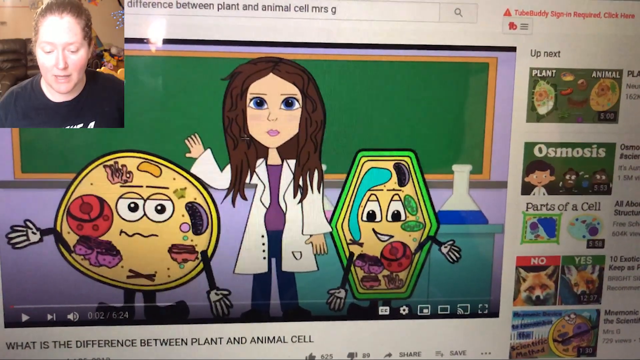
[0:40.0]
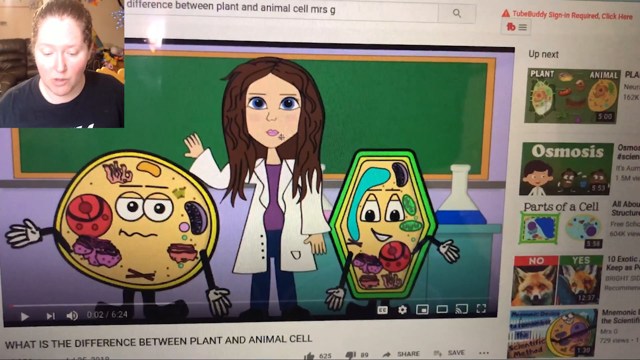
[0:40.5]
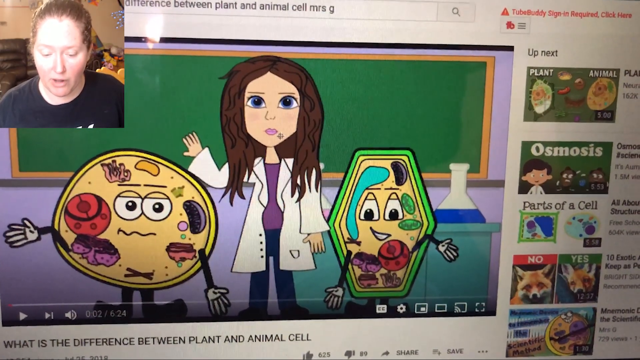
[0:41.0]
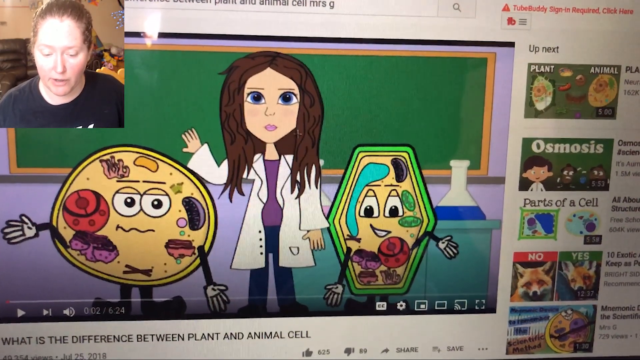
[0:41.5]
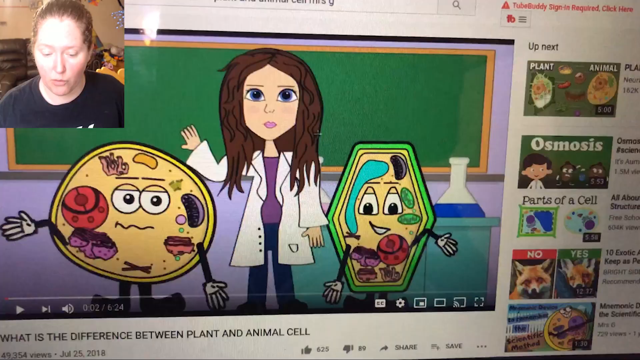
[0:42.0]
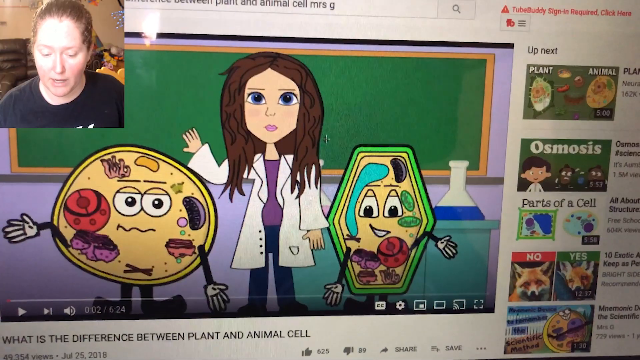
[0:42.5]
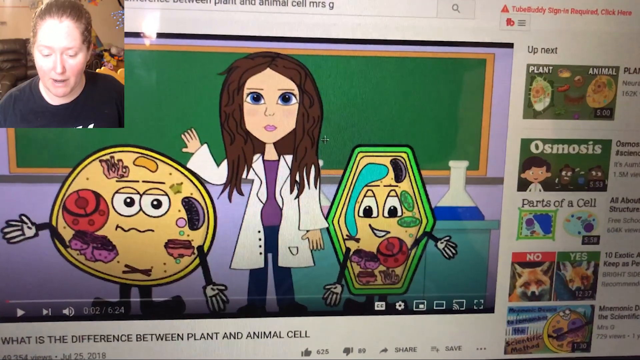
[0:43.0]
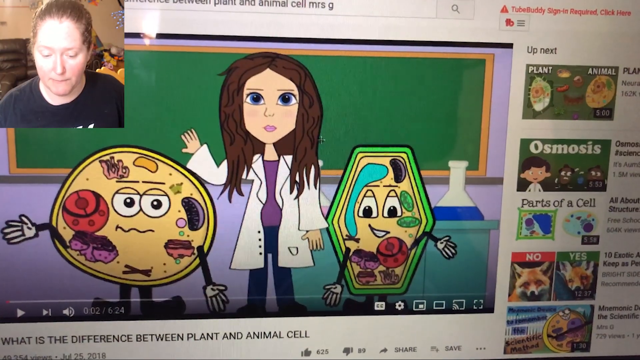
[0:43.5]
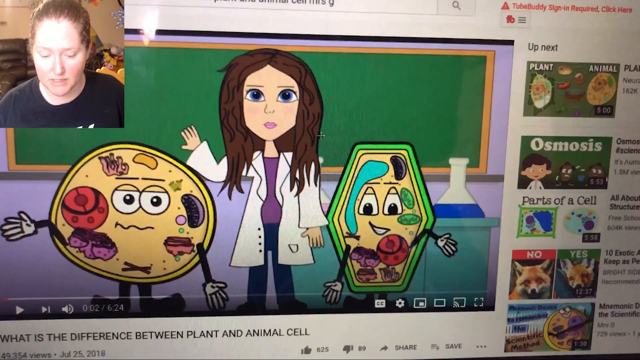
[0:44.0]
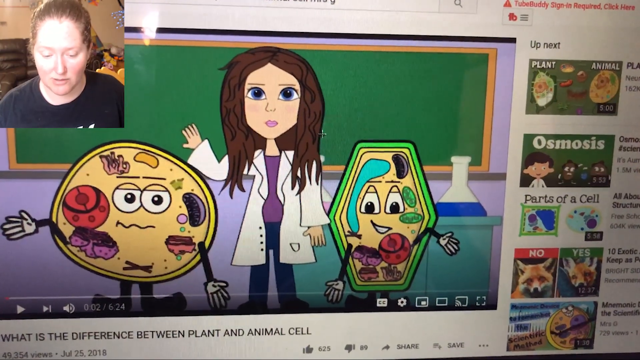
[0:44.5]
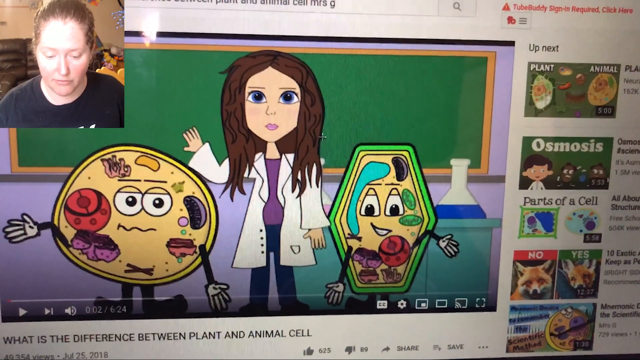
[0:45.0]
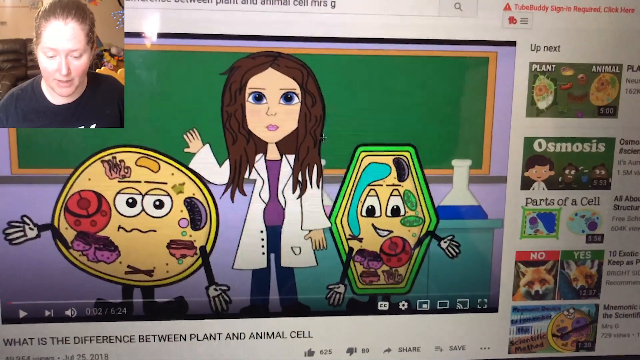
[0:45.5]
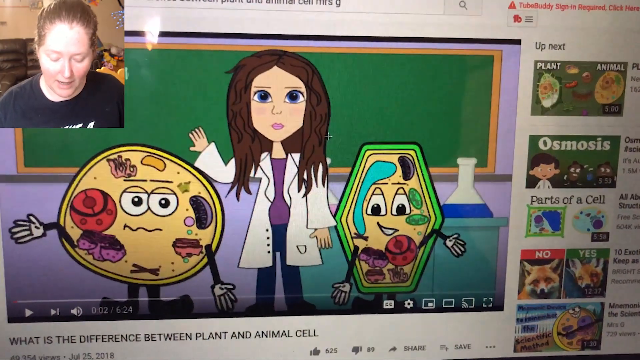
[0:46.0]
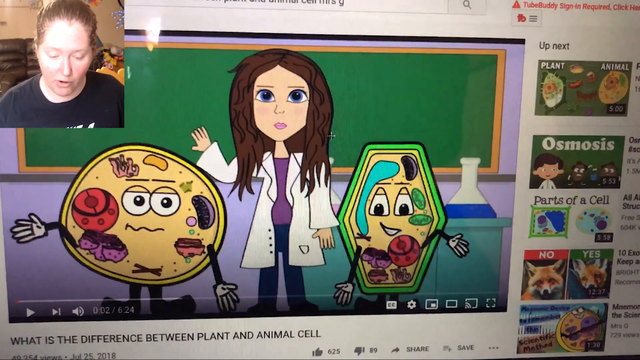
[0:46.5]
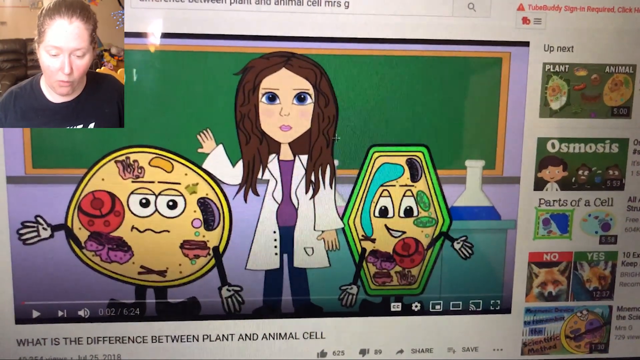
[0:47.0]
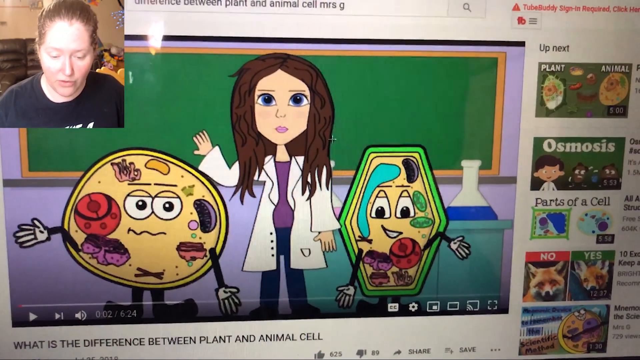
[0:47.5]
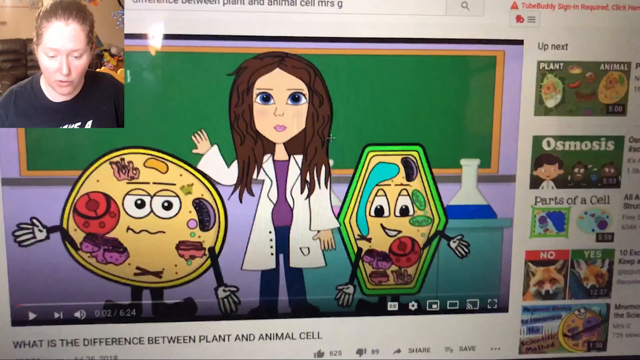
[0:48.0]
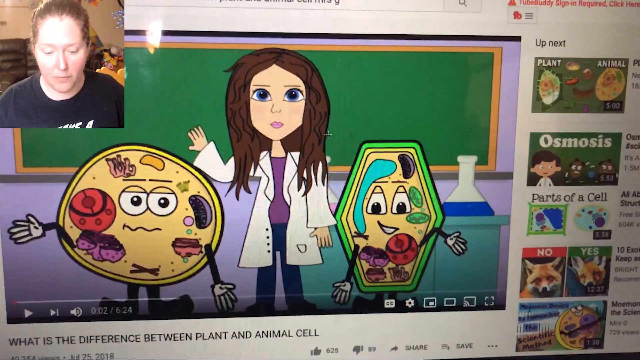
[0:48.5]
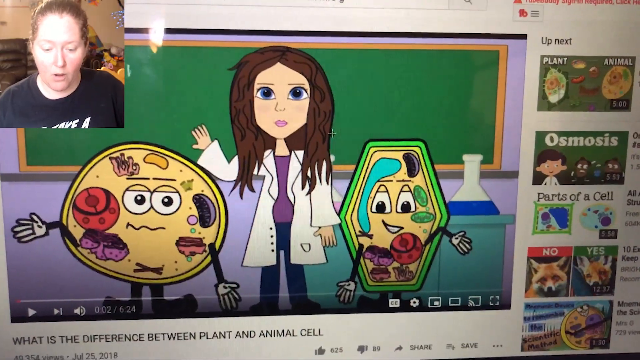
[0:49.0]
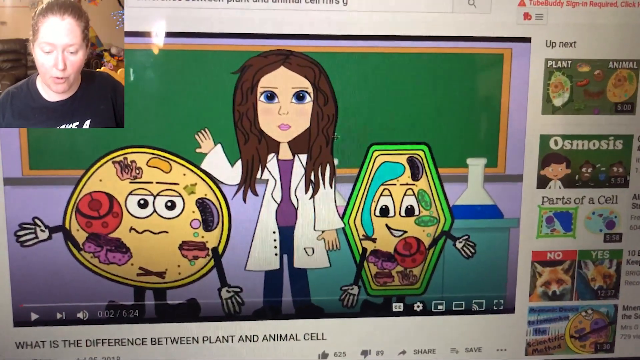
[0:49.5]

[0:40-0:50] The woman appears on the facecam. Her hair is tied back, possibly in a ponytail, and is sort of reddish; she wears a black shirt, the lighting looks pretty yellow, and there is a bit of redness to her face. Her screen still shows a camera recording of her computer screen with the same science video, still at pretty much the same point, showing the female scientist and the two cells beside her. At the top, not in the search bar, text reads "difference between plant and animal cell, Mrs. G", possibly the title of the video.